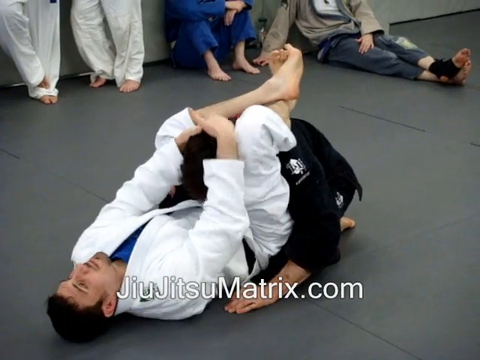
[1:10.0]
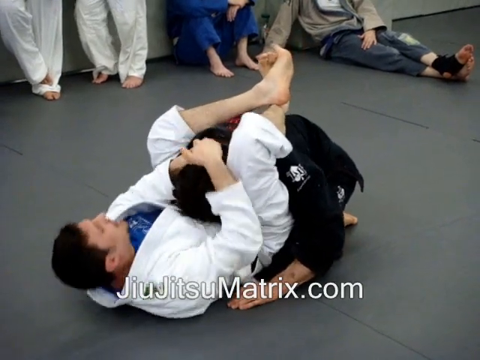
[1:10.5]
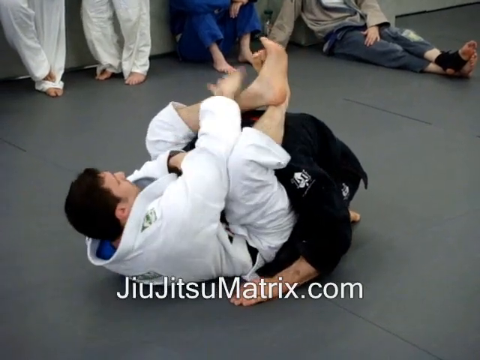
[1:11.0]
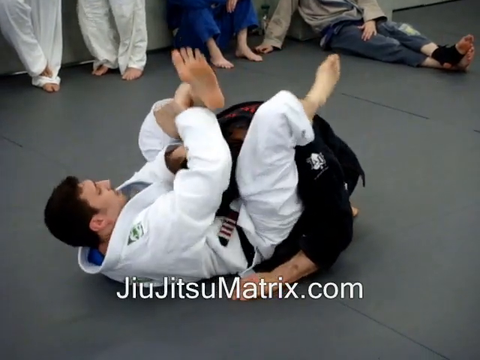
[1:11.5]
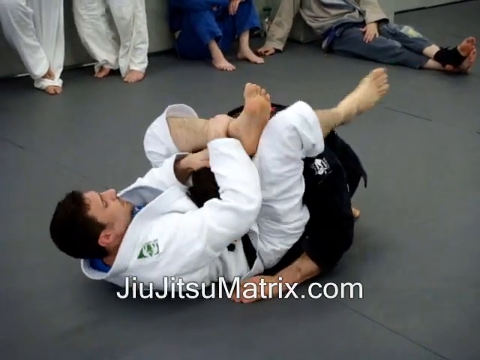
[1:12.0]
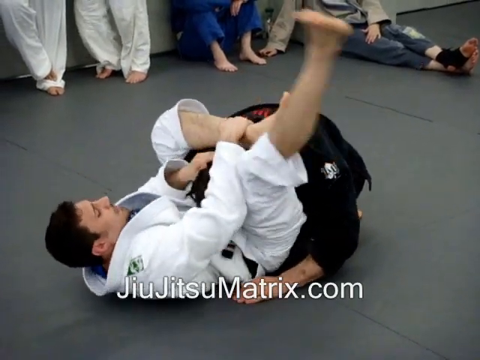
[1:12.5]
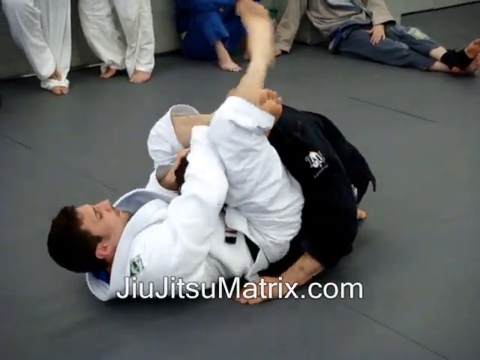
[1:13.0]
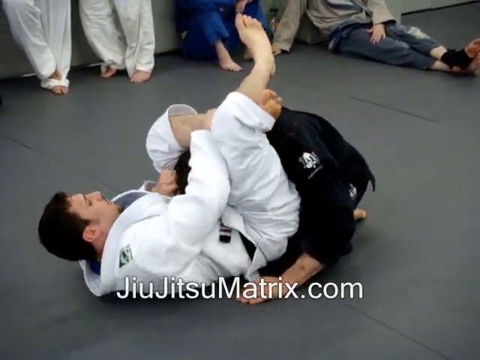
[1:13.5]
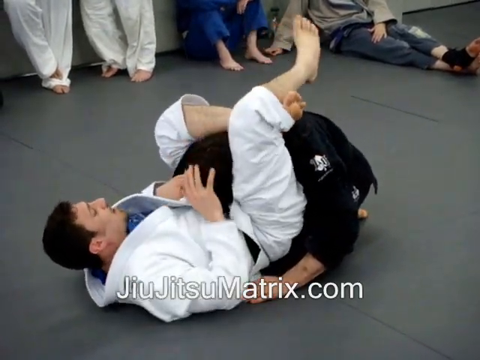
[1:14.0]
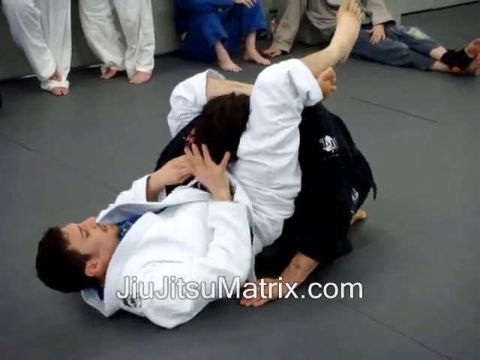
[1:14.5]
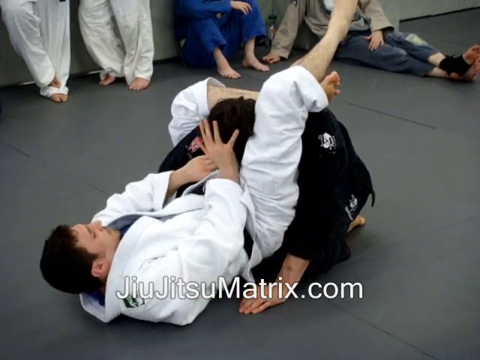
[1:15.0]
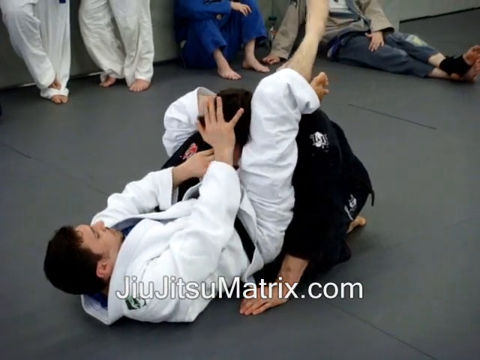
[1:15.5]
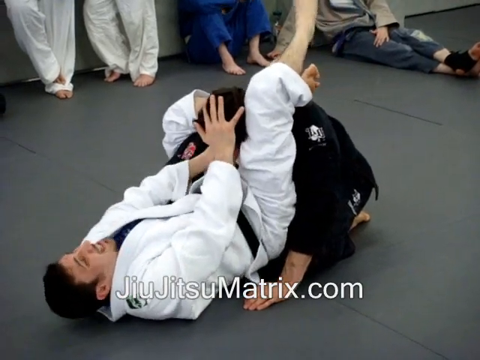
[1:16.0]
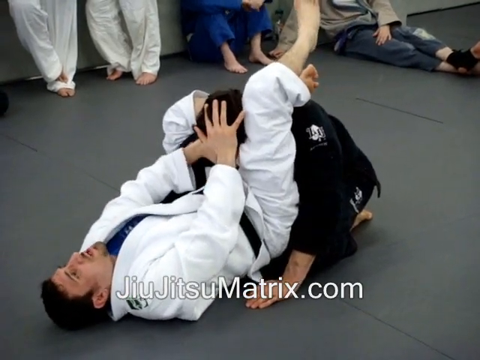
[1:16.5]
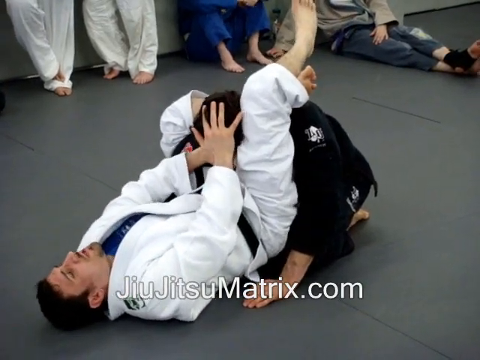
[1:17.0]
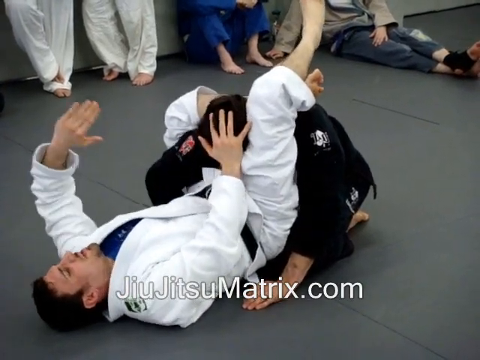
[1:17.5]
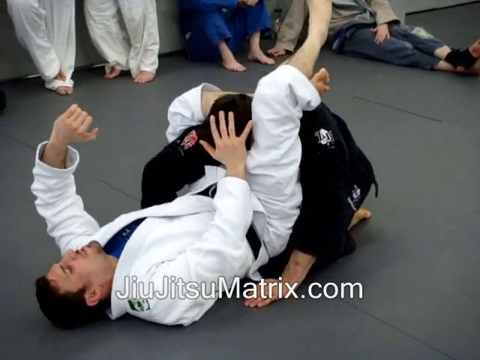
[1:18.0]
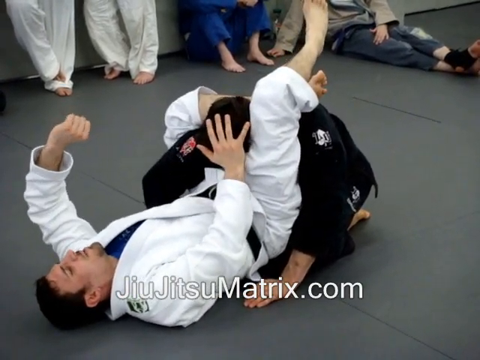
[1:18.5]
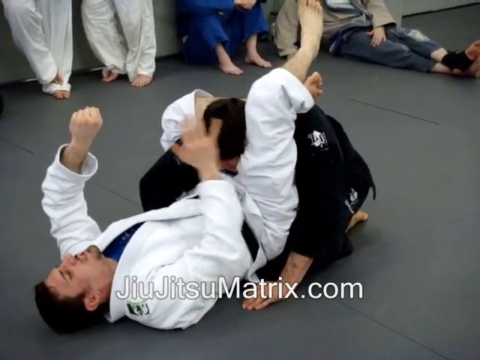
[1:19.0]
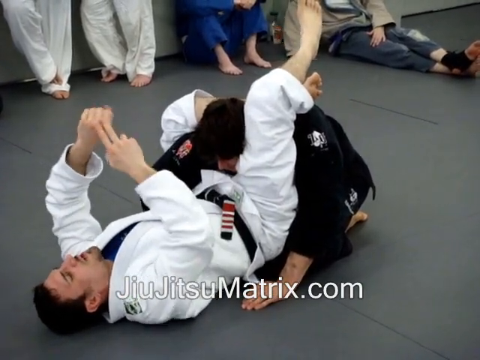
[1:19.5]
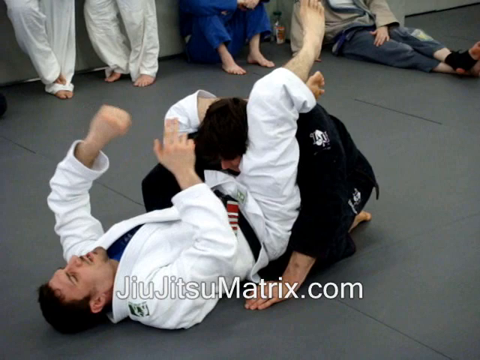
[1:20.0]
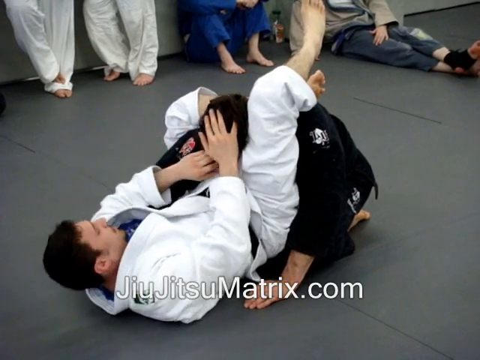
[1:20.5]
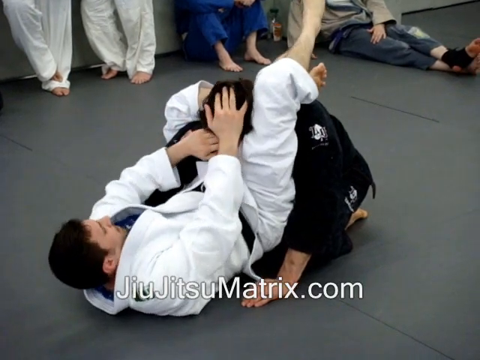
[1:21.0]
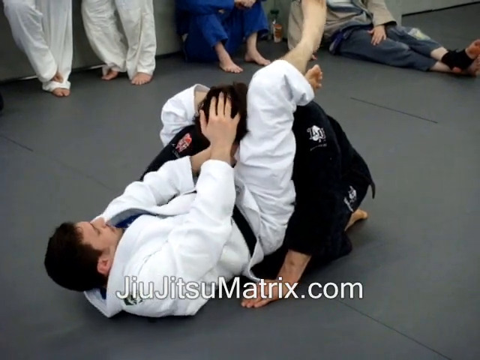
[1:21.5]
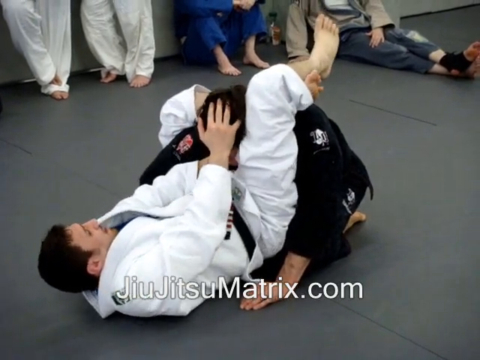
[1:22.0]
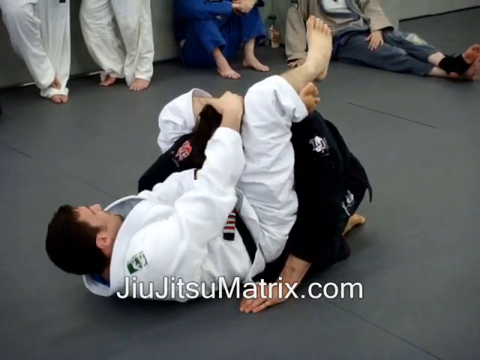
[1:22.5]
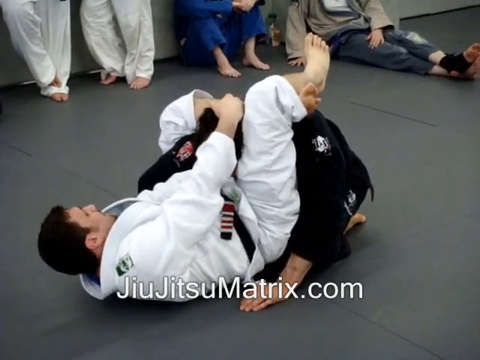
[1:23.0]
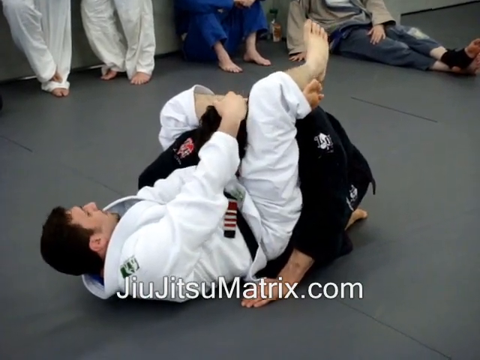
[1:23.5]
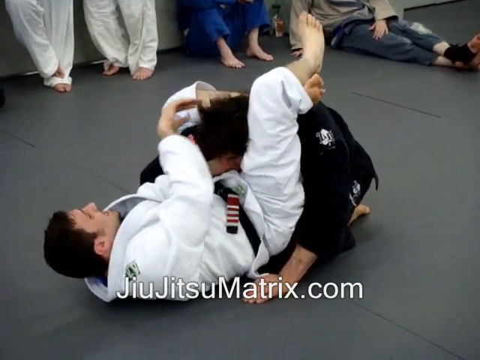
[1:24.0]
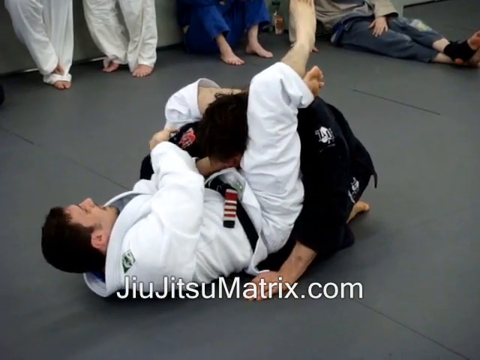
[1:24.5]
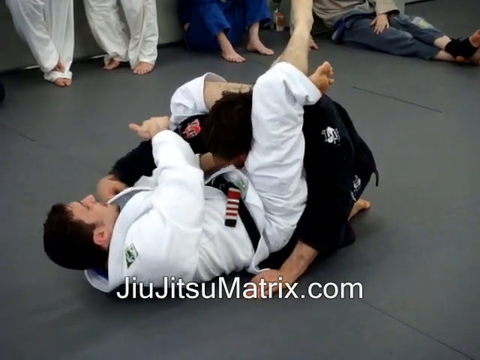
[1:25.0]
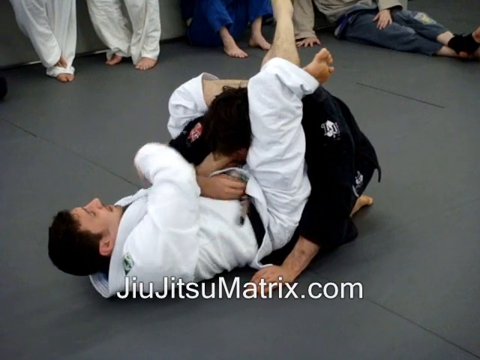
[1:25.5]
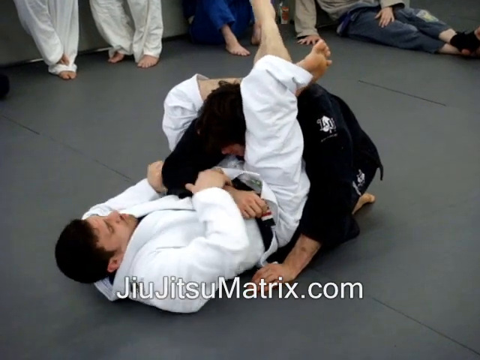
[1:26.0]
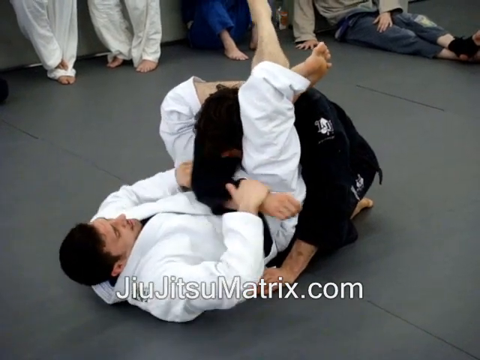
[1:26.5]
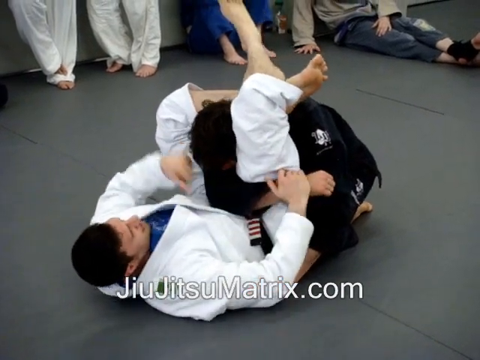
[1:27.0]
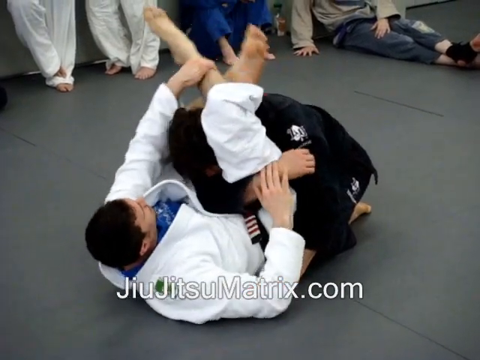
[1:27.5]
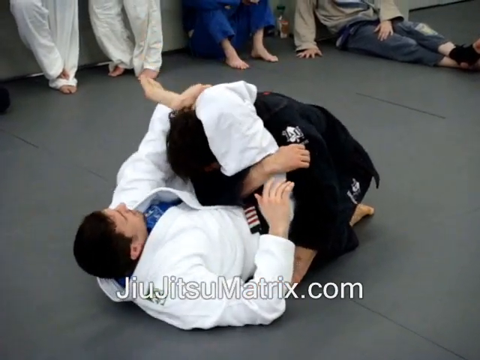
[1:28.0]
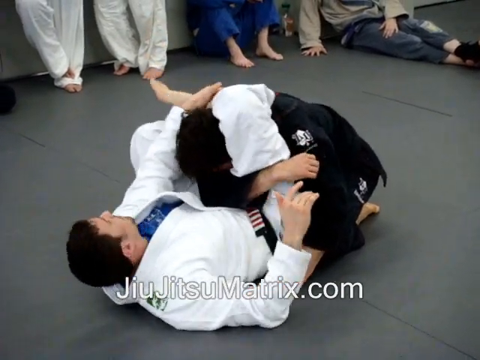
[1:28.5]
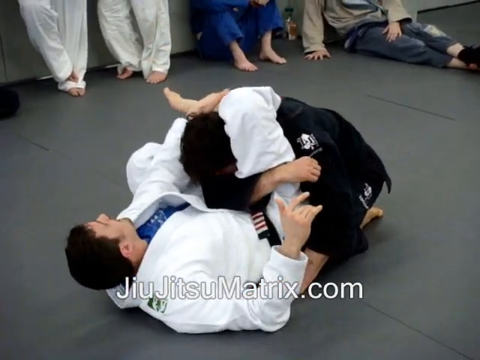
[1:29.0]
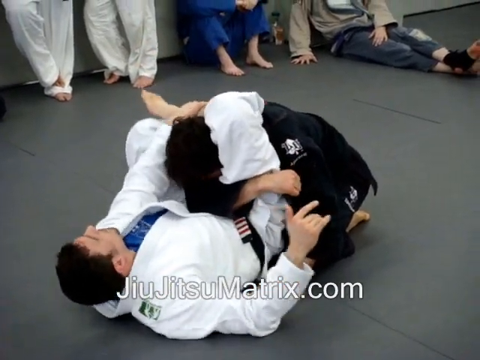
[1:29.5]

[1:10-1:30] The teacher has his left and right legs up and over the student's head. The student is still sitting on his knees in a sort of almost prayer position while the teacher holds his head. The teacher pulls the head down, places his left leg over the student's neck, then loops his right leg up and around, pressing his left ankle into the crook of his inner knee, and locks his legs together. He puts his hand, palm first, on the student's forehead, grabs the student's face, then moves his hand back and withdraws both hands. The student waits. The teacher puts his hand back on top of the student's head and then over the student's mouth. Pulling the student's face down into the hand, he removes his arms and guides the student's right arm across his stomach to link around his right leg; the student holds the teacher's thigh with his right arm. The teacher then uses his arms to grab that right leg by the ankle and presses it down over the student's head, changing the position of his legs.